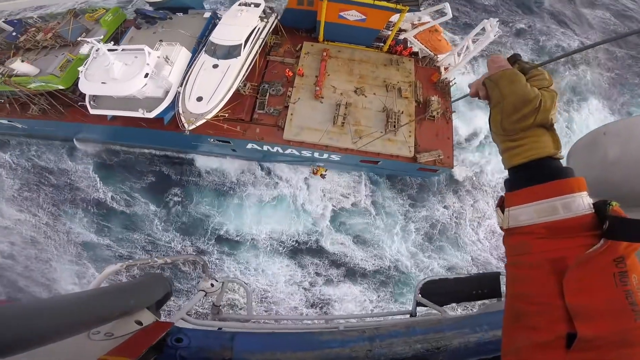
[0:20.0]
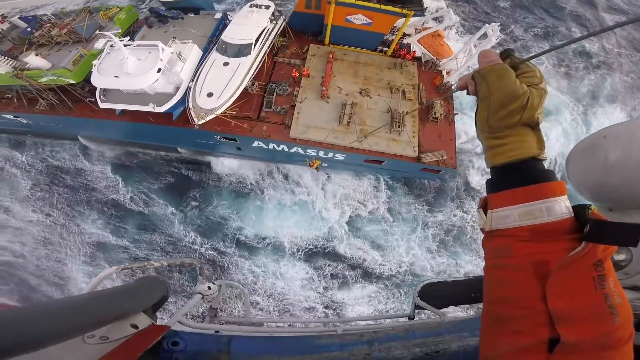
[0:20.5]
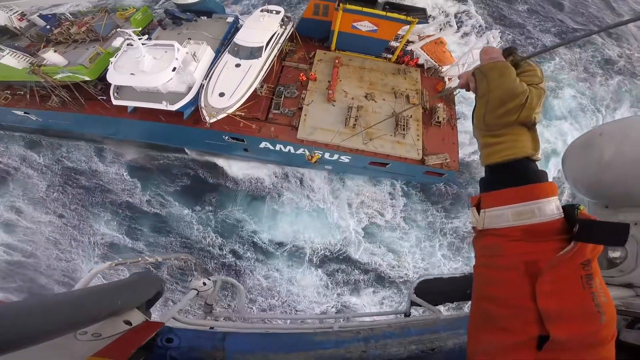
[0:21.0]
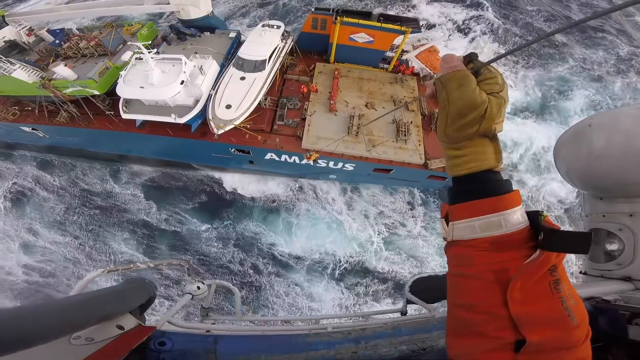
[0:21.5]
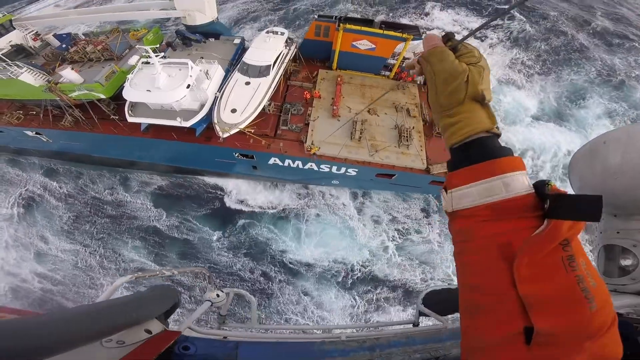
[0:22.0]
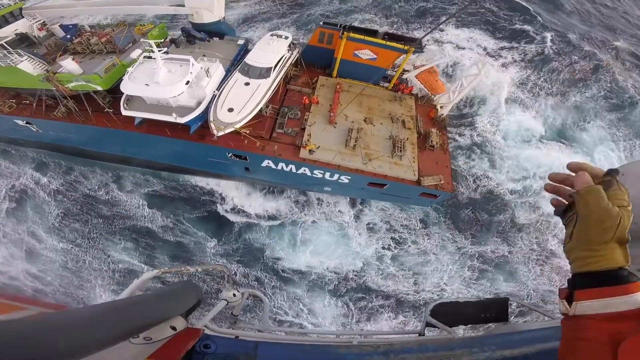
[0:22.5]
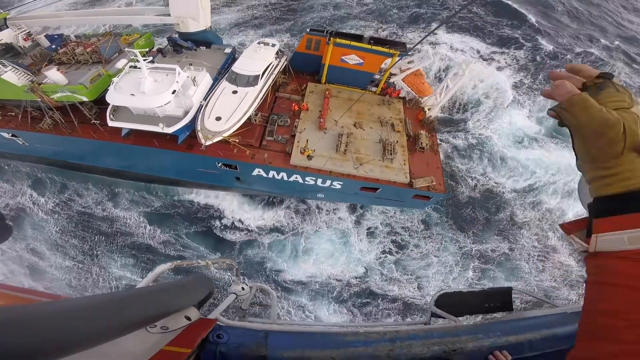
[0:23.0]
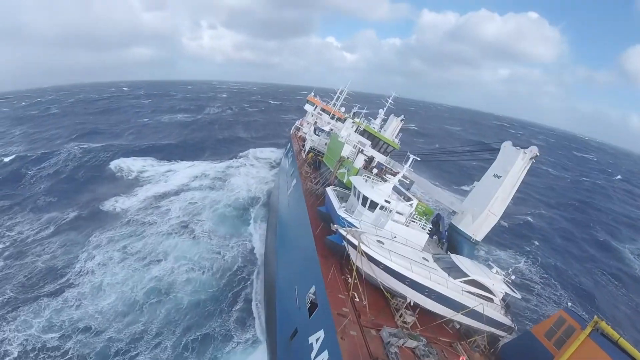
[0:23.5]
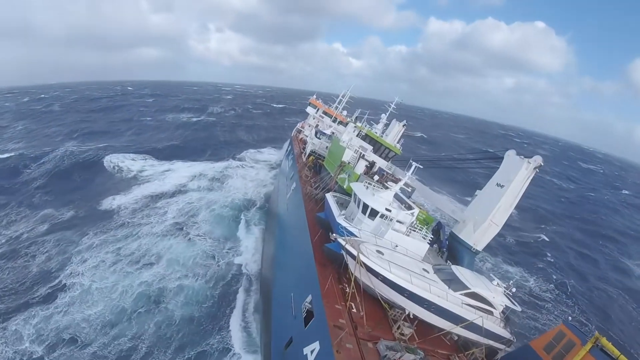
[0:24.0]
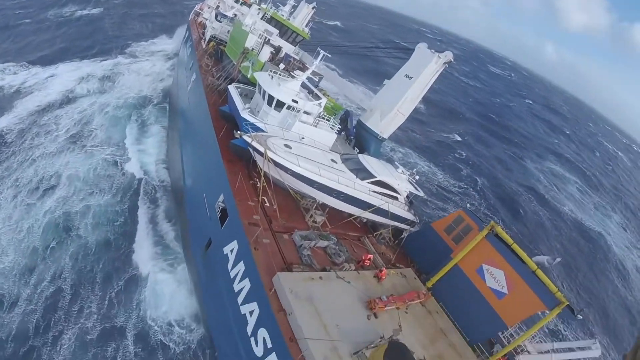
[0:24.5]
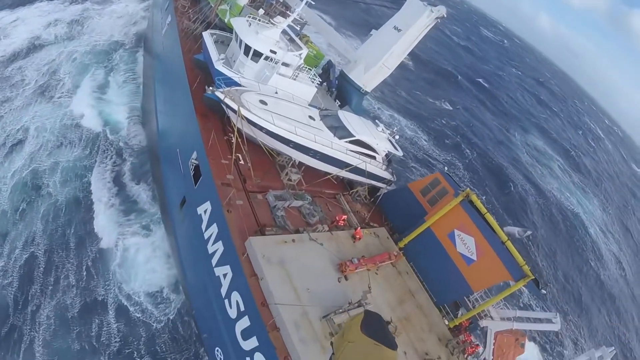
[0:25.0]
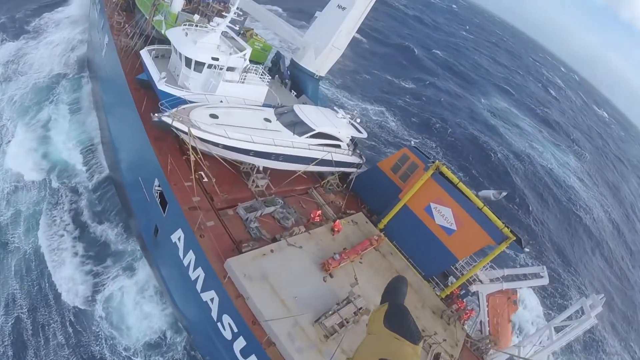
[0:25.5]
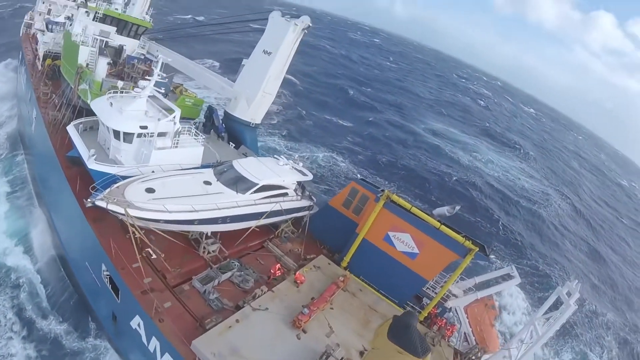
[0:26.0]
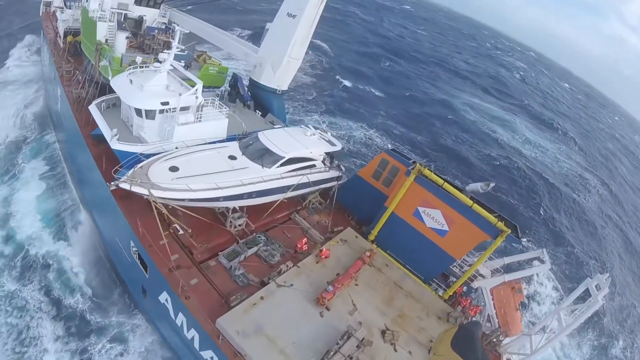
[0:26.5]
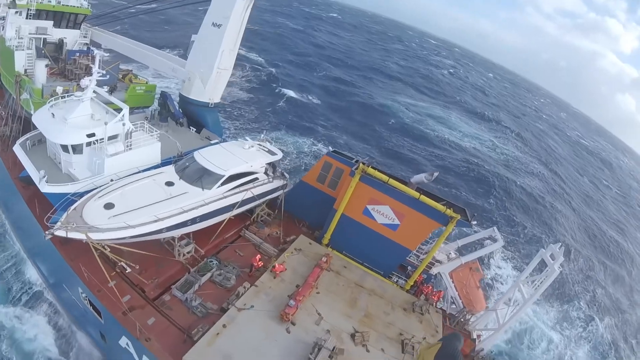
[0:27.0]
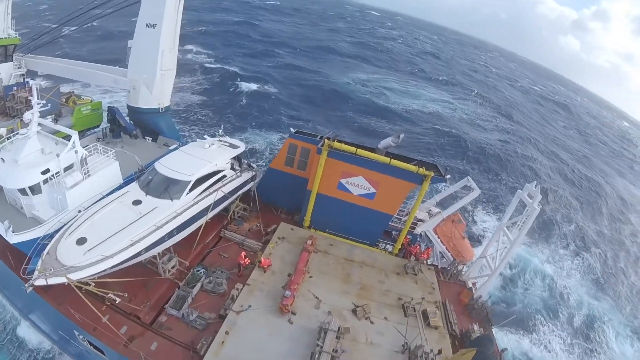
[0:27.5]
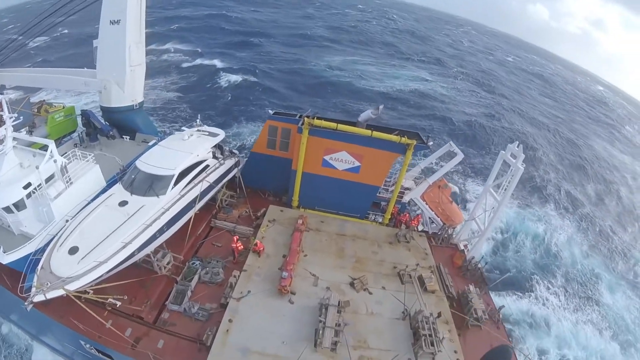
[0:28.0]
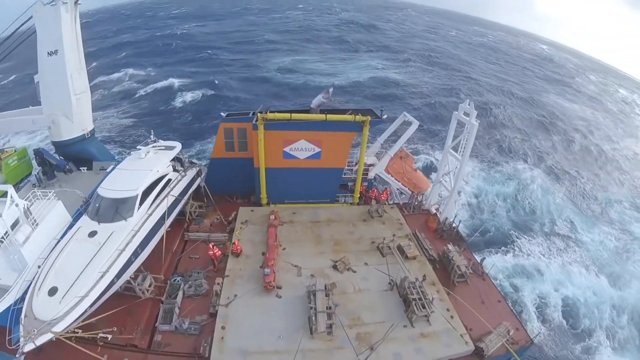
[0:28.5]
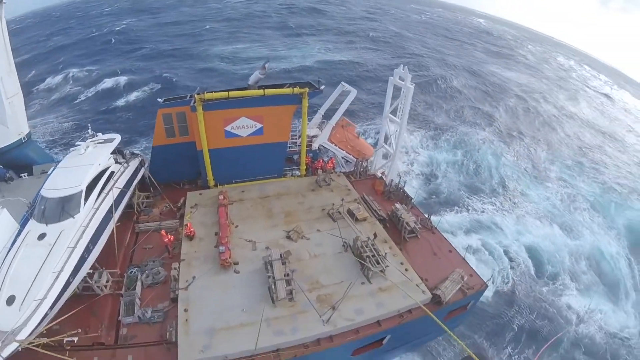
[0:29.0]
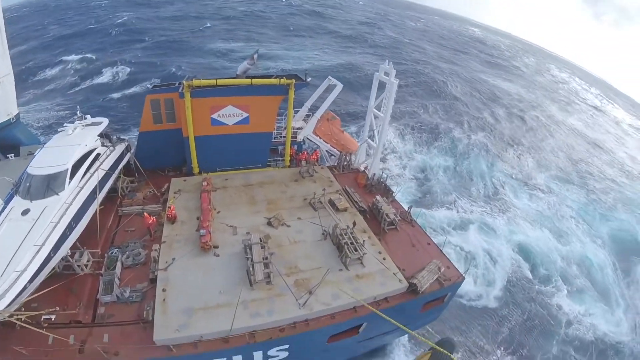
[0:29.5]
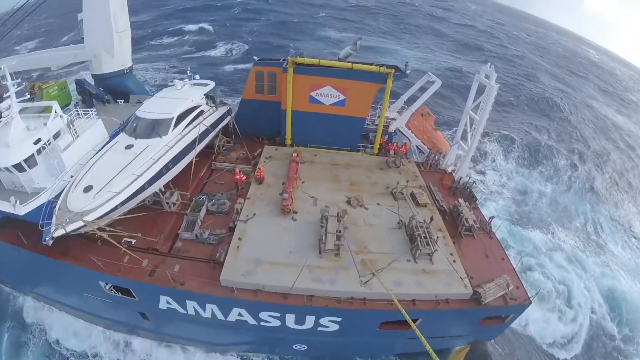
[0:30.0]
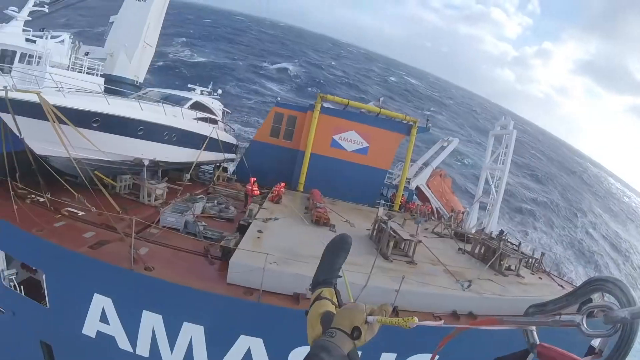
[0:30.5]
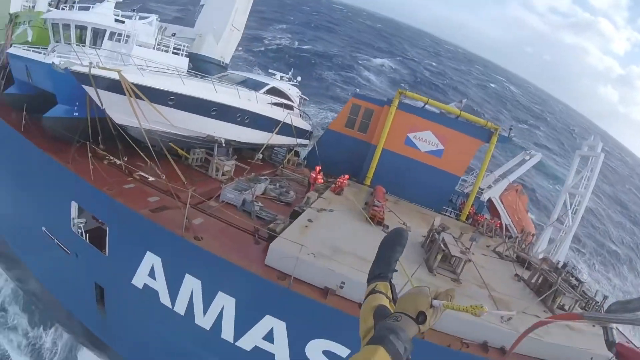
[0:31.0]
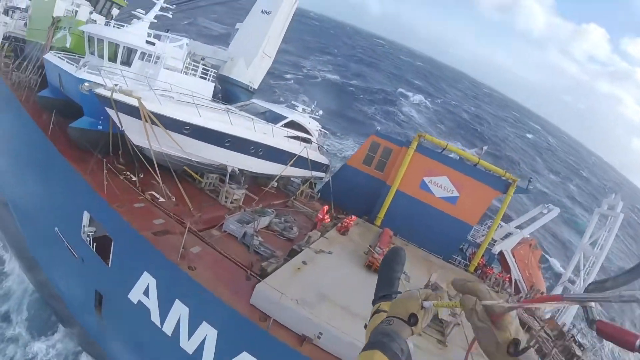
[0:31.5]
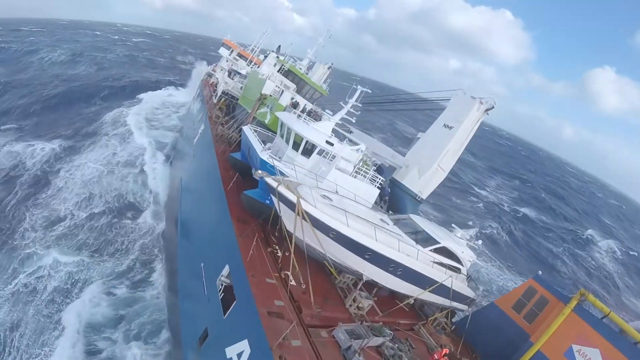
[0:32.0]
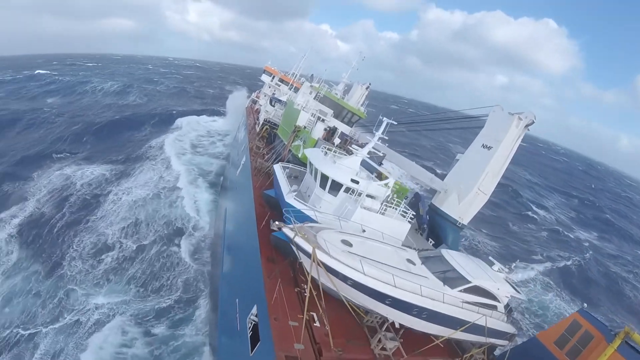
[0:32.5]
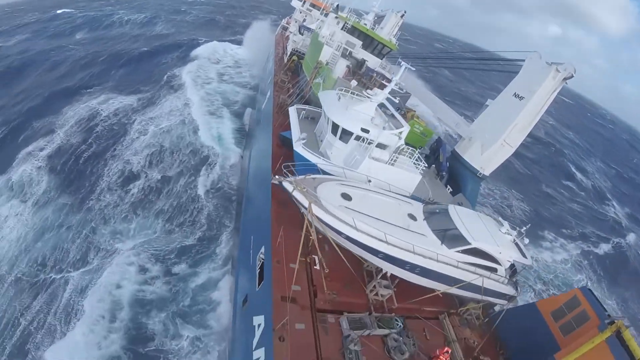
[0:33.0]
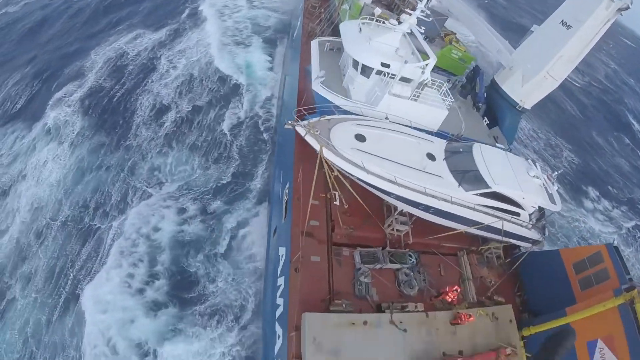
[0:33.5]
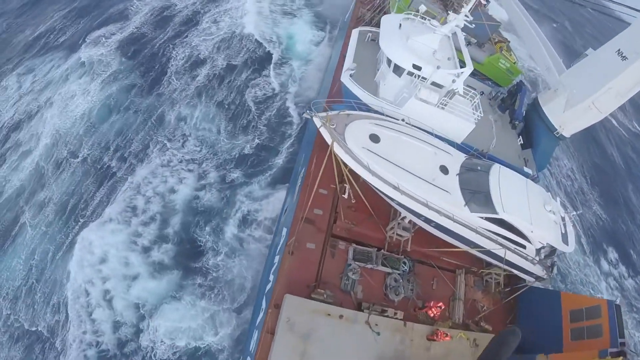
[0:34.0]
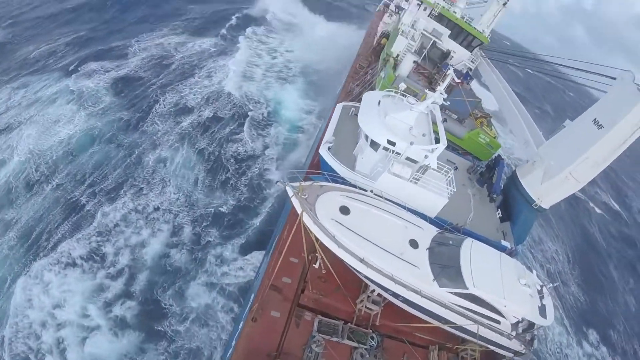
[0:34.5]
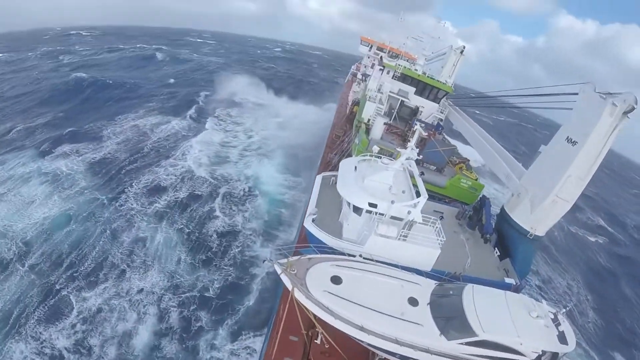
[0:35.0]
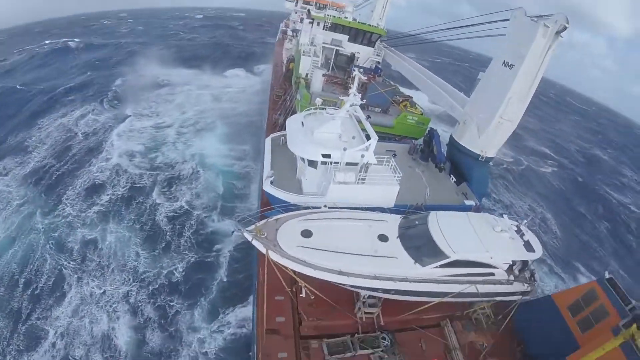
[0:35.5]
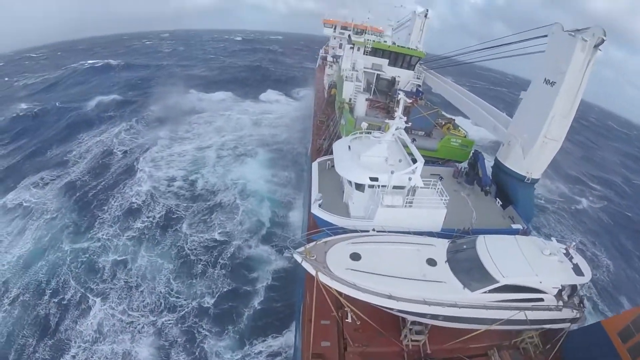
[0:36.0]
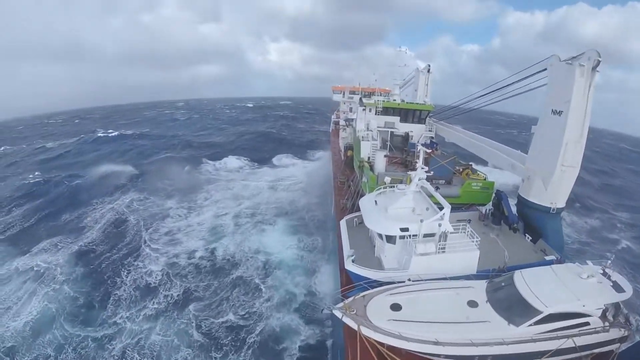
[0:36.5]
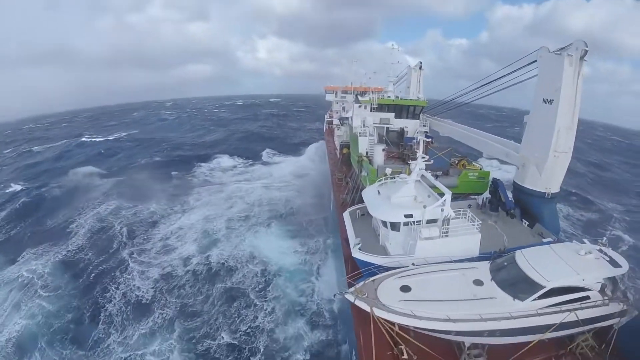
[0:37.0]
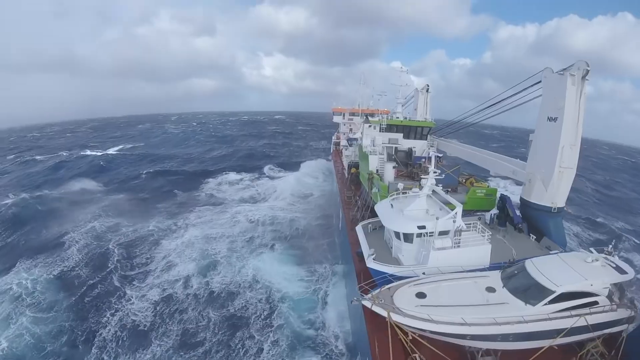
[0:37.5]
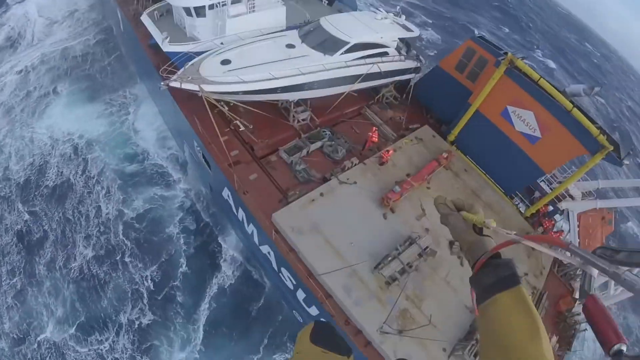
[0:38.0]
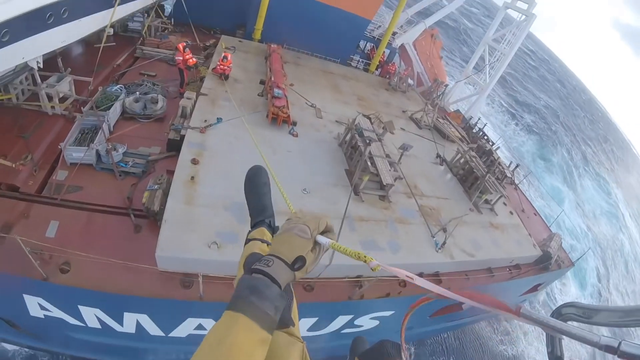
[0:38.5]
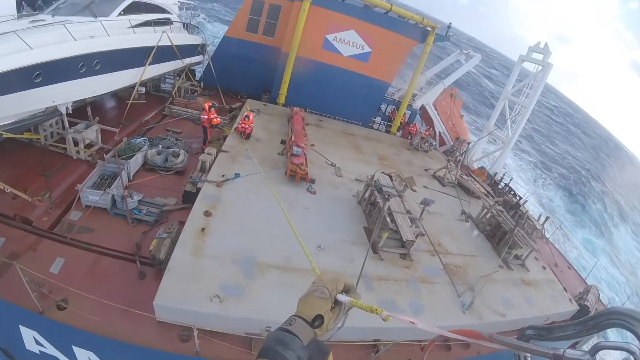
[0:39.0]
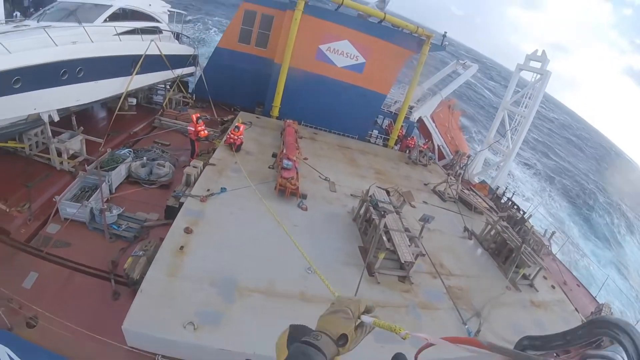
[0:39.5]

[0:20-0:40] The scene cuts to the man going down with the rope. A hook has apparently been attached to the vessel, and the man lowers himself down the rope onto the smaller vessel. As he gets closer, the rope appears to be attached to the smaller vessel. There also seem to be two other men wearing something like raincoats; it is not entirely clear whether they are people, but they seem to be moving, possibly sailors on the boat monitoring the hook and the man coming down.